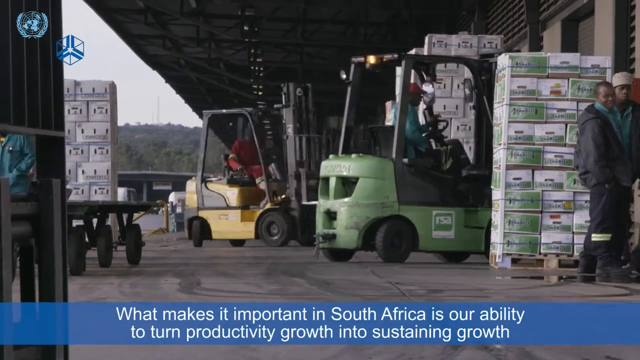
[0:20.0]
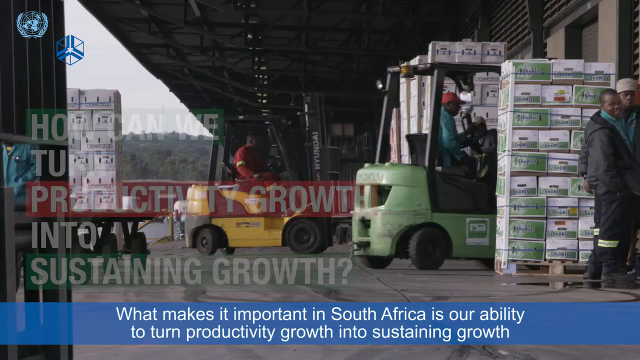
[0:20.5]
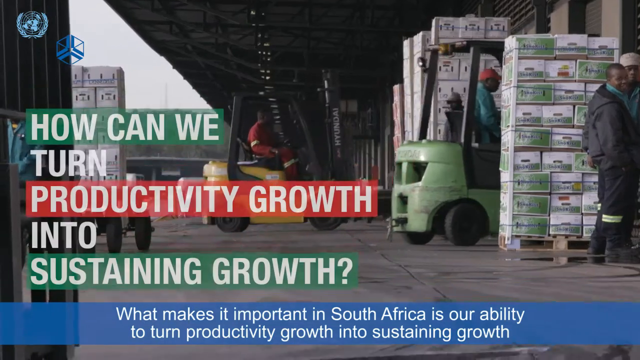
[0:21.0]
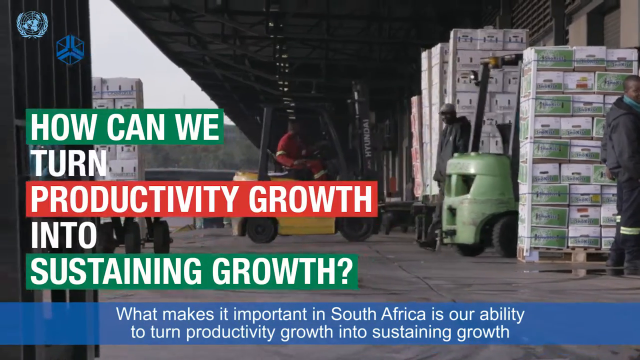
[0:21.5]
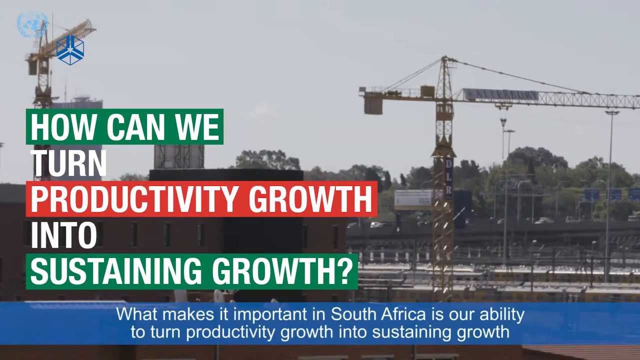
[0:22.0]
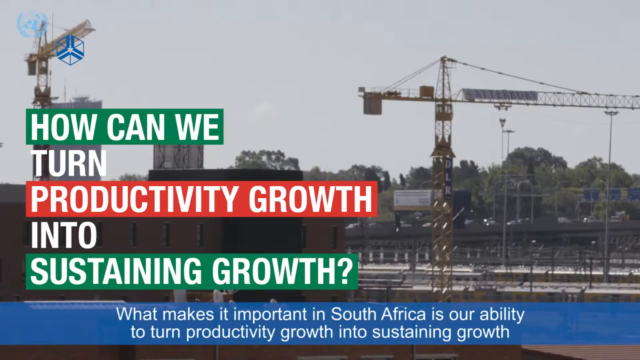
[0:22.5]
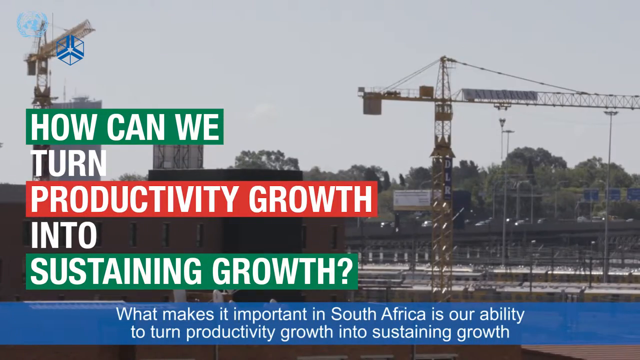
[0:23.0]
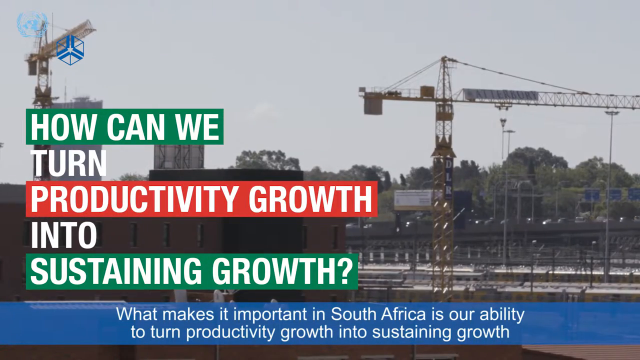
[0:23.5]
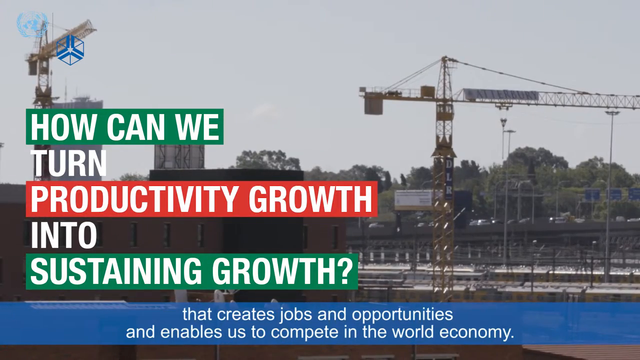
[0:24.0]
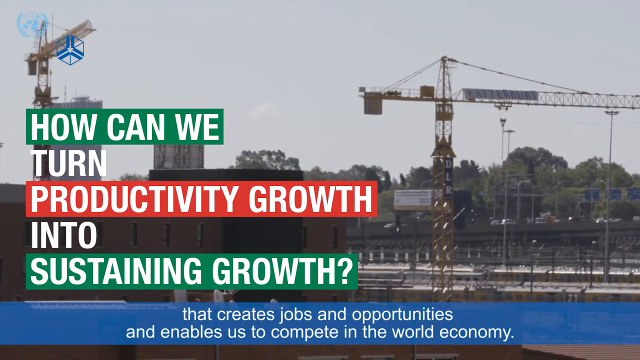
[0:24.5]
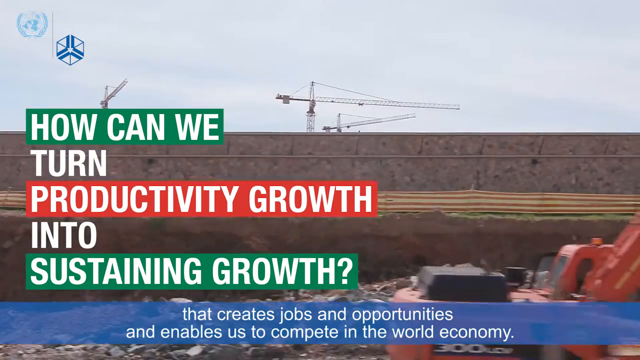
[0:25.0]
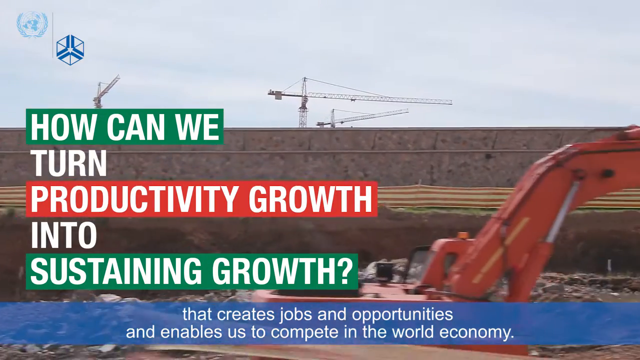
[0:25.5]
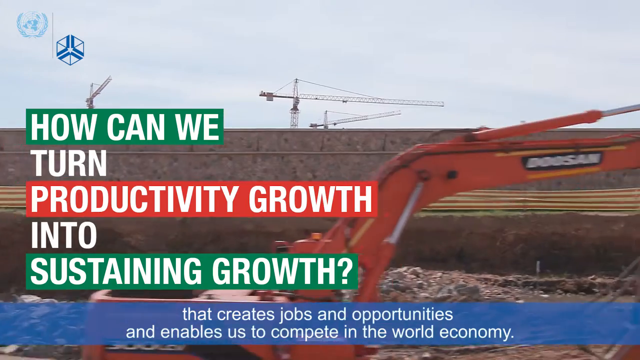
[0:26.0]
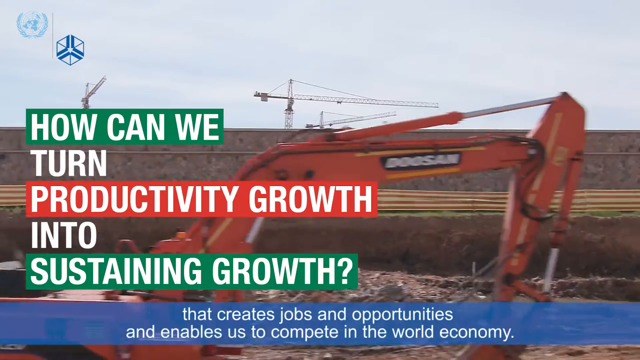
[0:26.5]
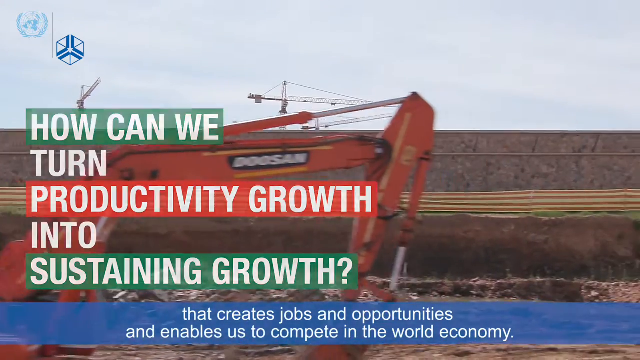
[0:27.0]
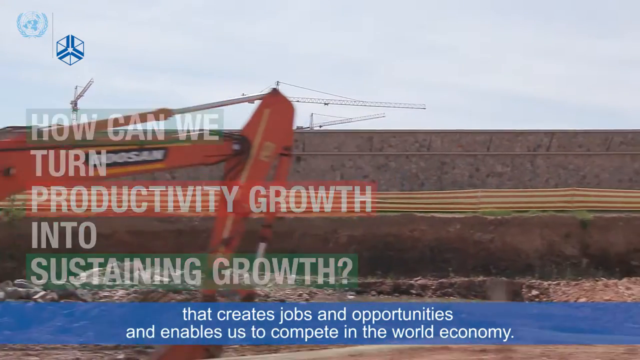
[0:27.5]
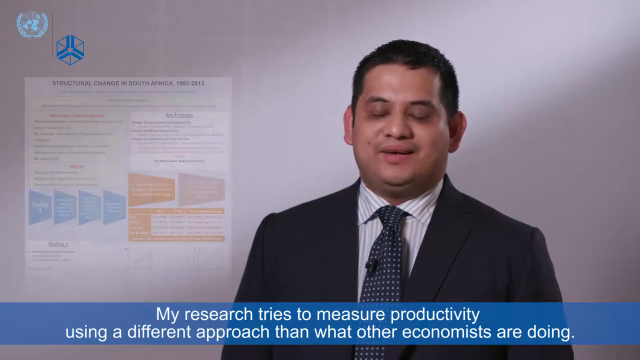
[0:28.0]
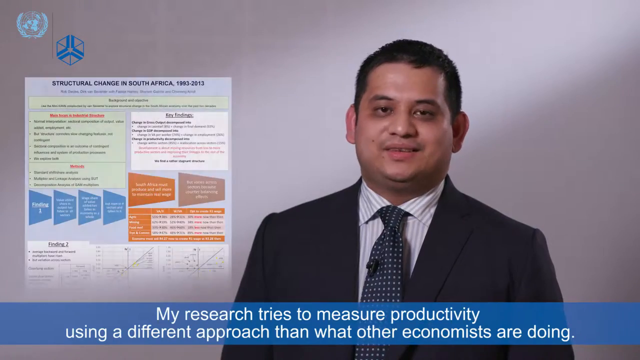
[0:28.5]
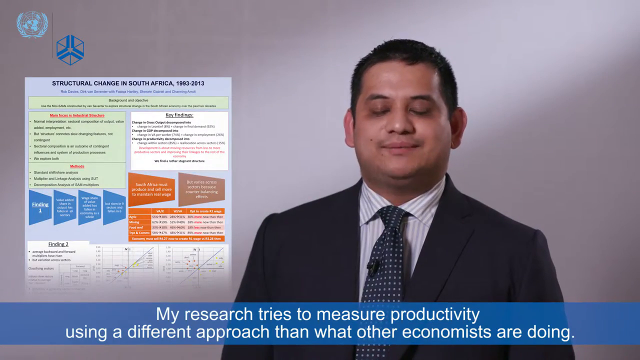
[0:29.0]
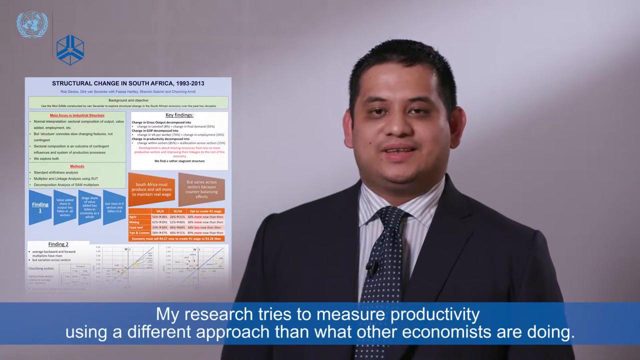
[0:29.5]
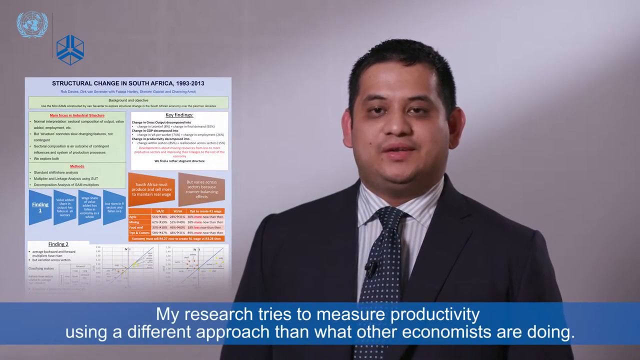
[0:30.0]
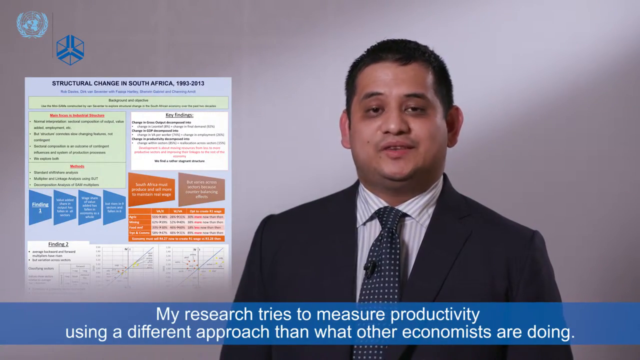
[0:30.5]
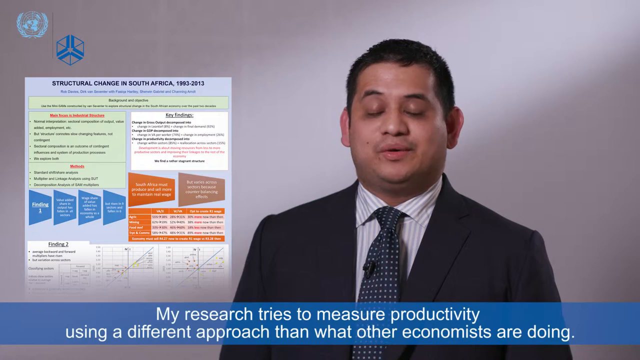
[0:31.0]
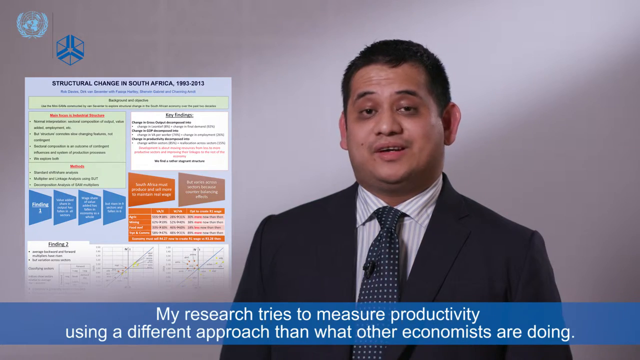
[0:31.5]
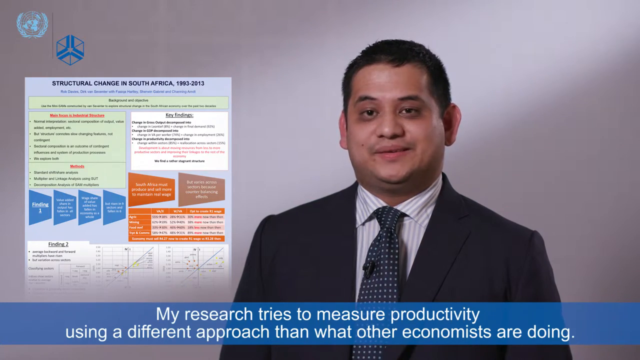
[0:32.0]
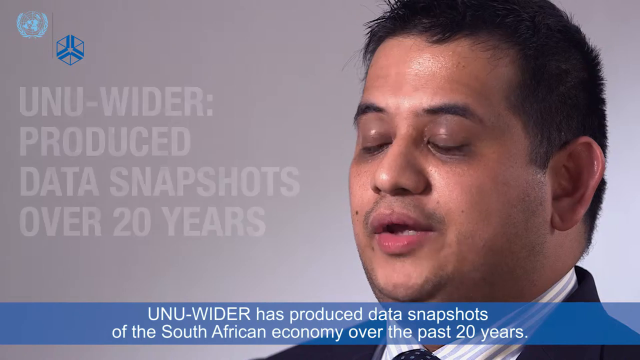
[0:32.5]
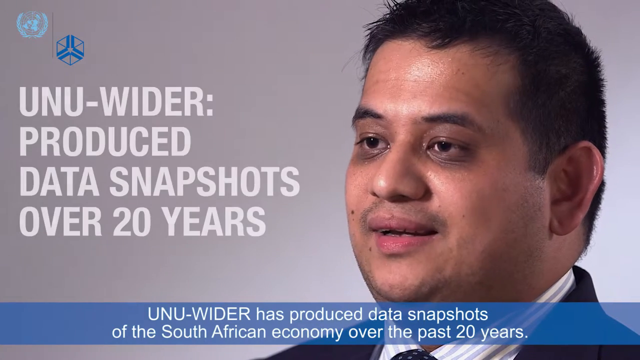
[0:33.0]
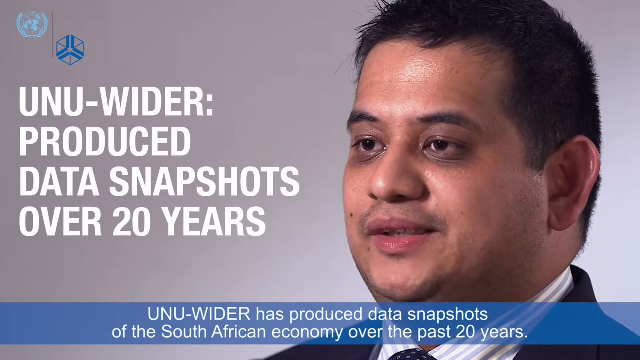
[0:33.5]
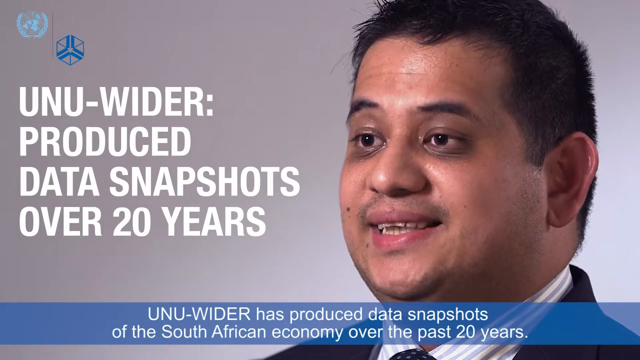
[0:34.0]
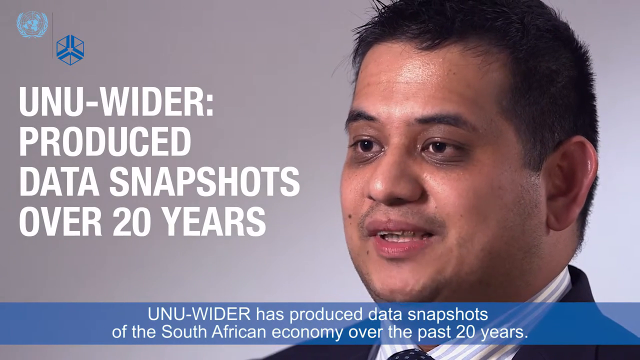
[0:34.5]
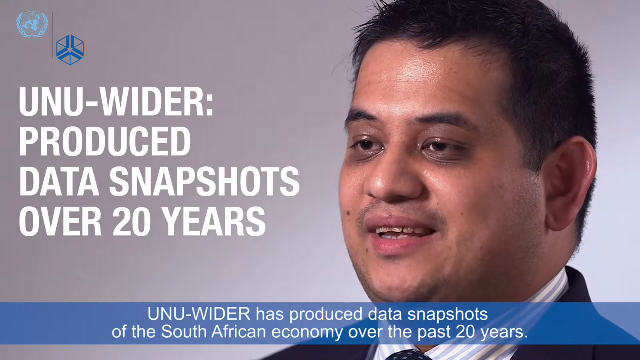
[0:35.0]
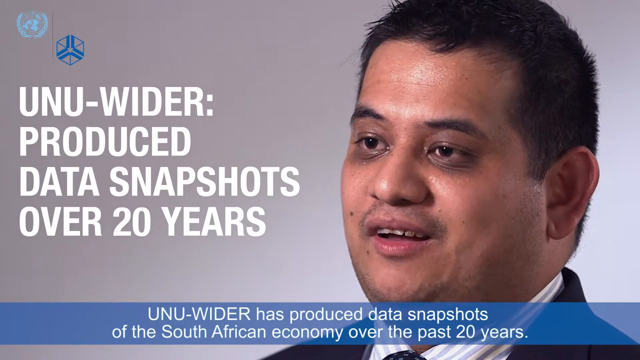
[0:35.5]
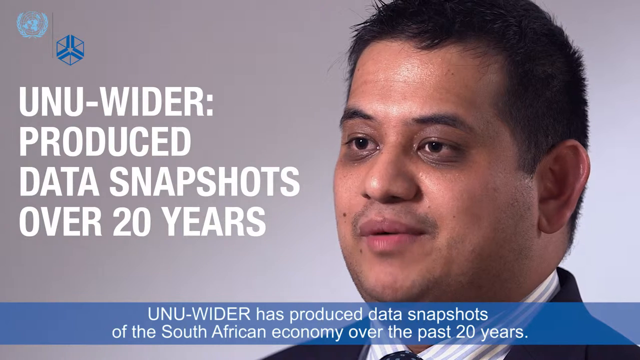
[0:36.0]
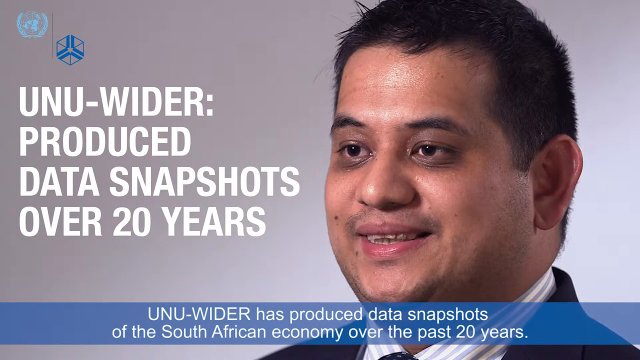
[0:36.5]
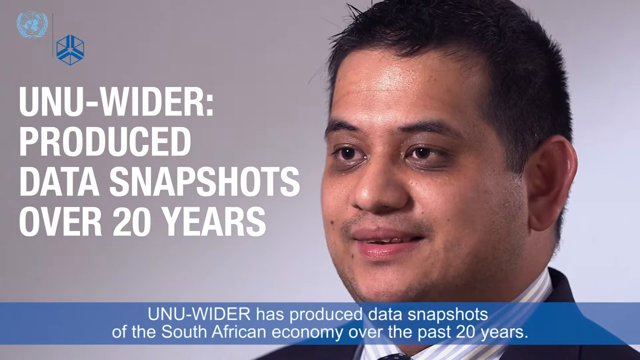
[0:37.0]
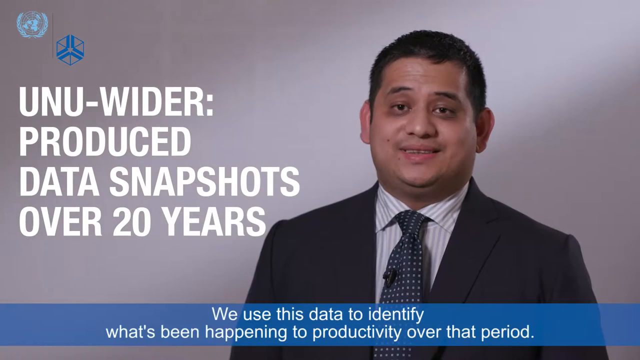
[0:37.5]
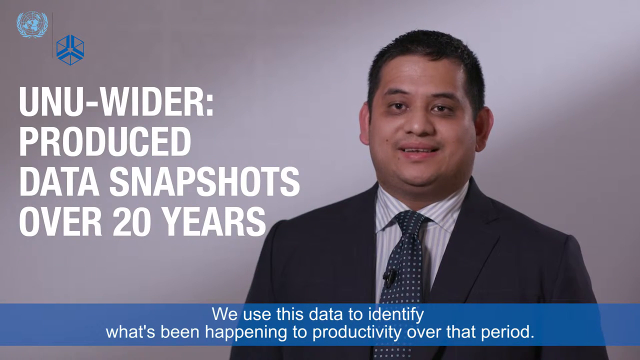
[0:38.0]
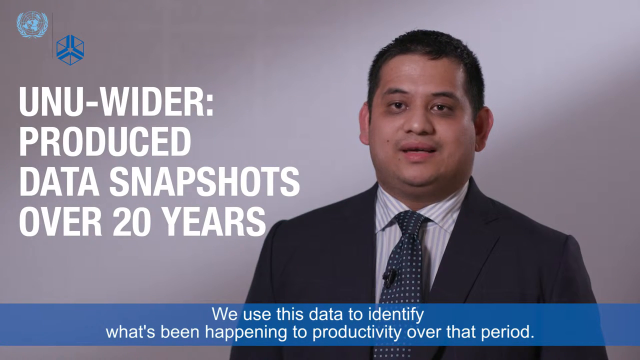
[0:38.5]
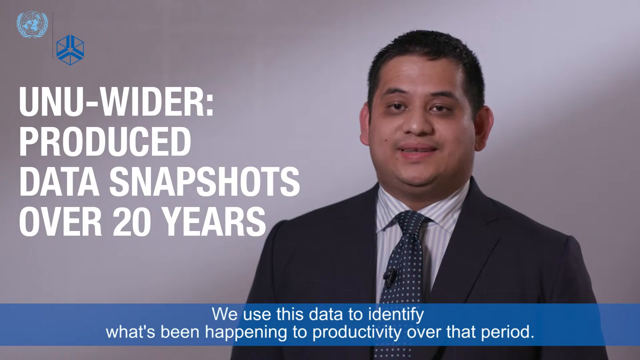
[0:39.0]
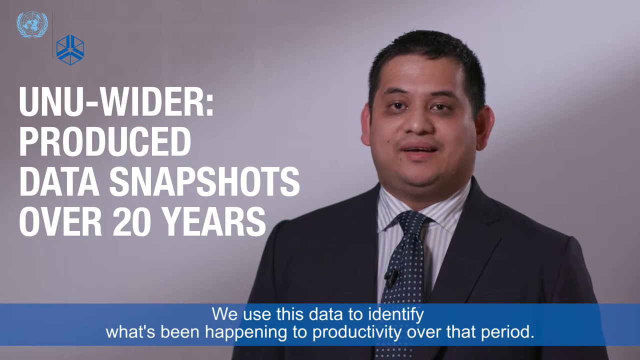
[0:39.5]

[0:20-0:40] A caption reads "how can we turn productivity growth into sustainable growth?" The background footage shows roads, cranes and a building site. Footage interspersed with the presenter shows outdoor work, including building sites, cranes and forklifts transporting goods.